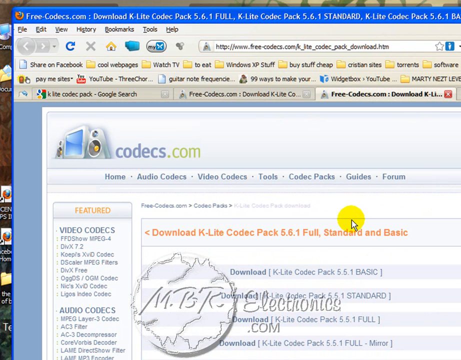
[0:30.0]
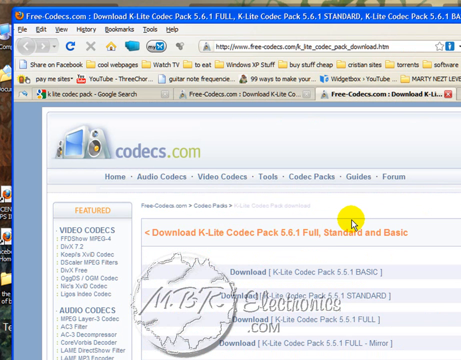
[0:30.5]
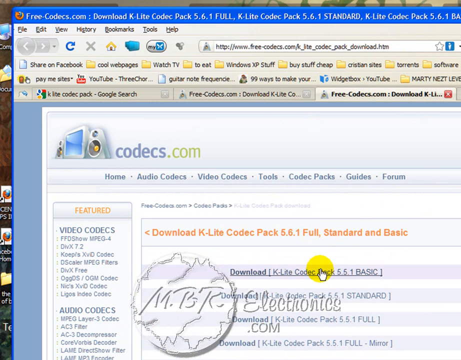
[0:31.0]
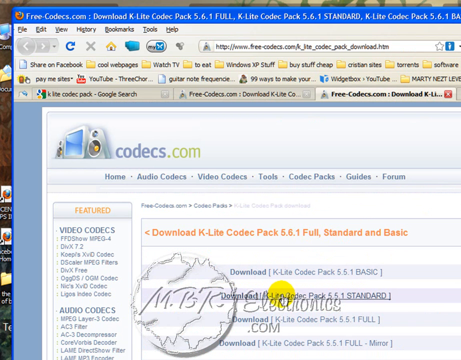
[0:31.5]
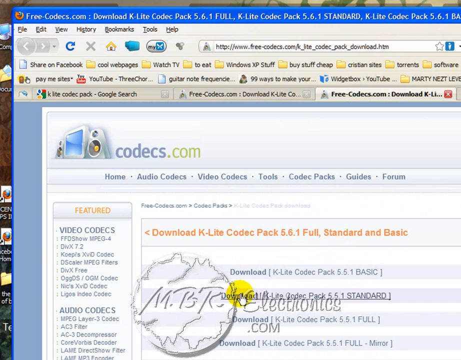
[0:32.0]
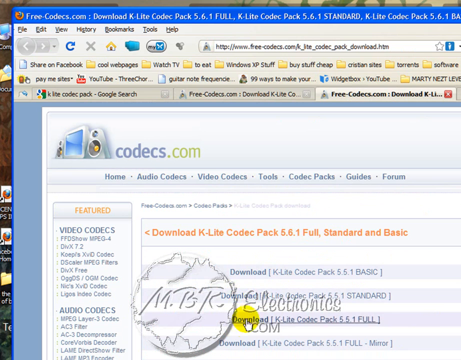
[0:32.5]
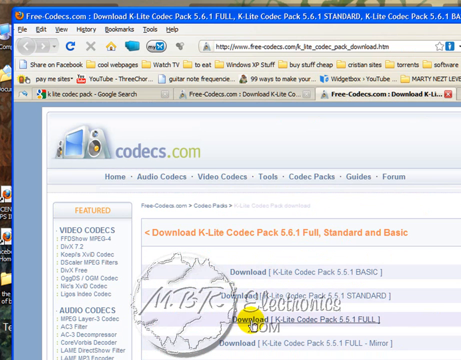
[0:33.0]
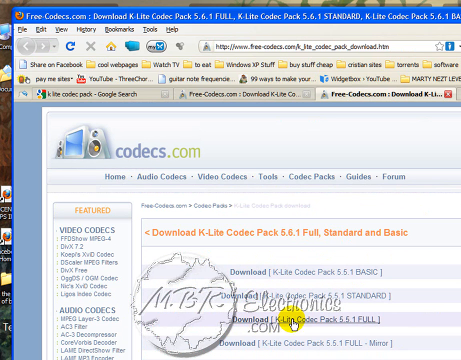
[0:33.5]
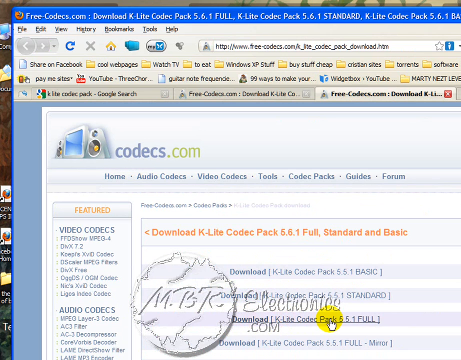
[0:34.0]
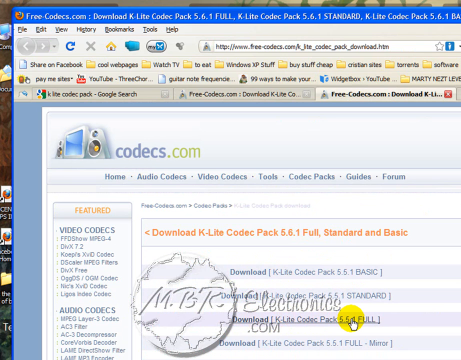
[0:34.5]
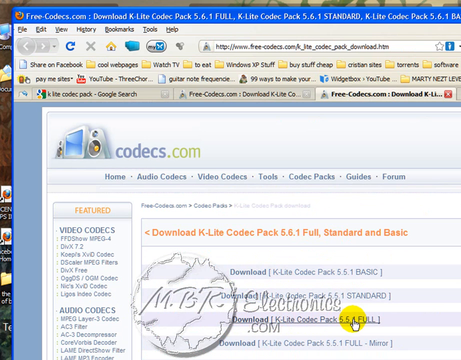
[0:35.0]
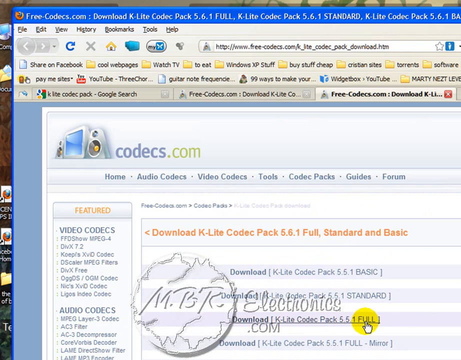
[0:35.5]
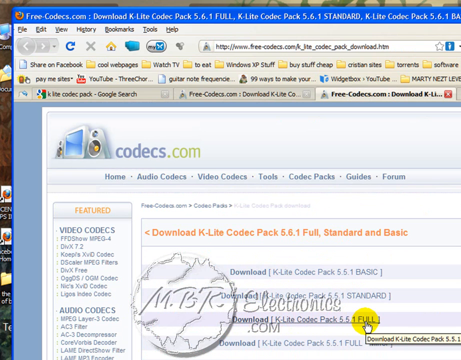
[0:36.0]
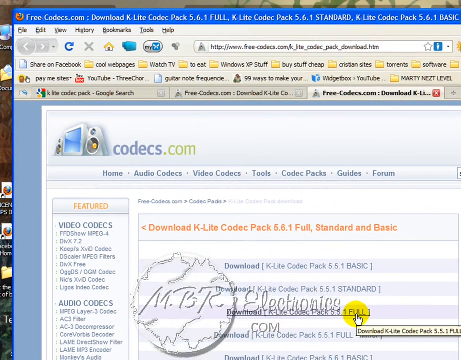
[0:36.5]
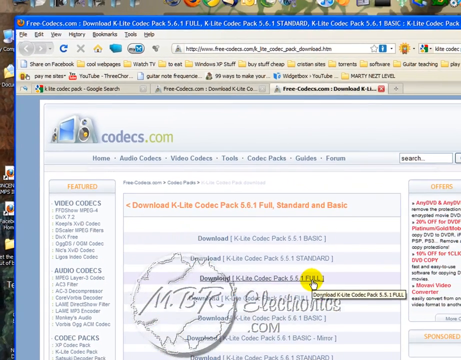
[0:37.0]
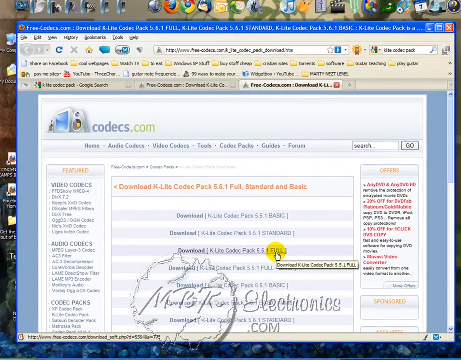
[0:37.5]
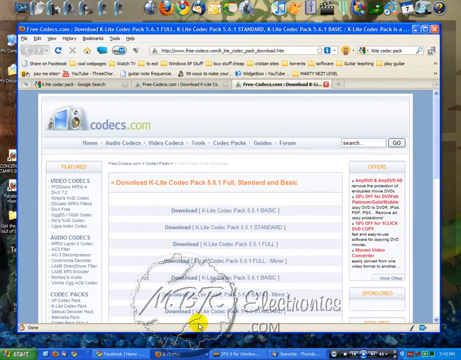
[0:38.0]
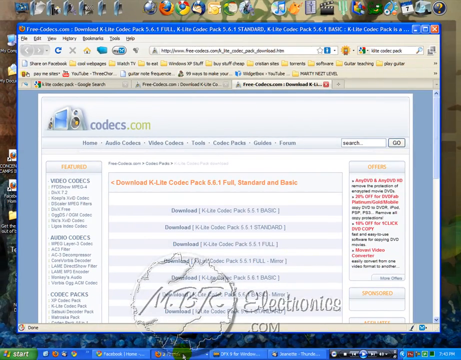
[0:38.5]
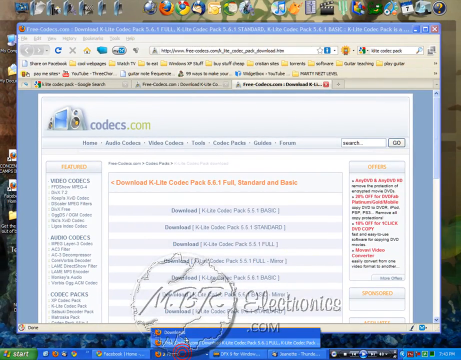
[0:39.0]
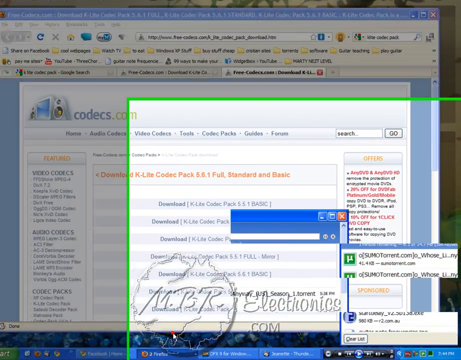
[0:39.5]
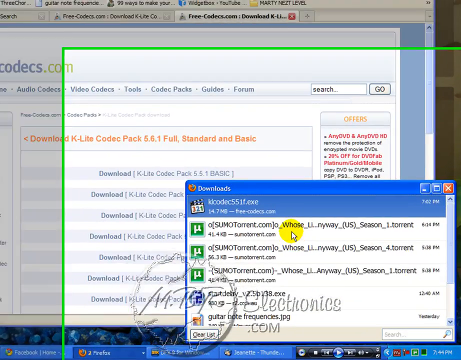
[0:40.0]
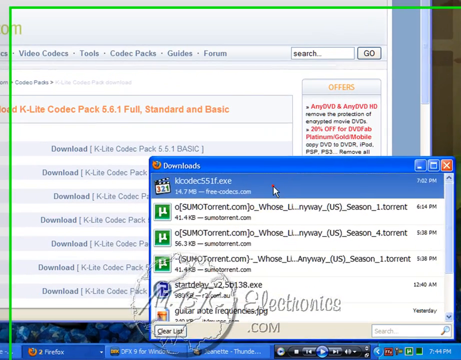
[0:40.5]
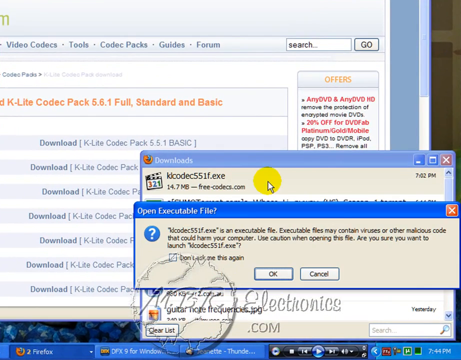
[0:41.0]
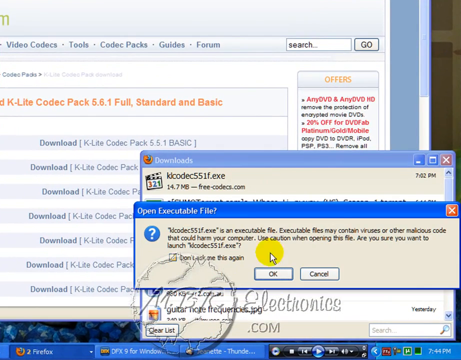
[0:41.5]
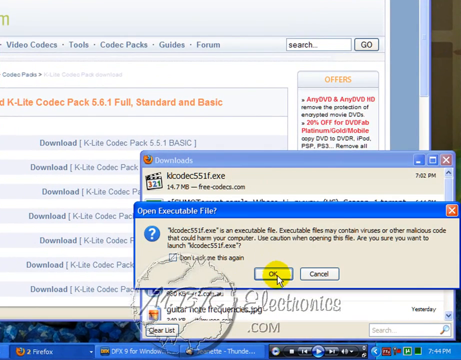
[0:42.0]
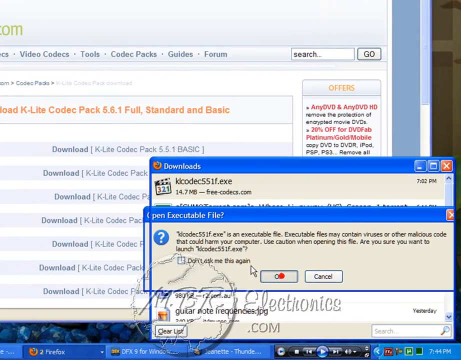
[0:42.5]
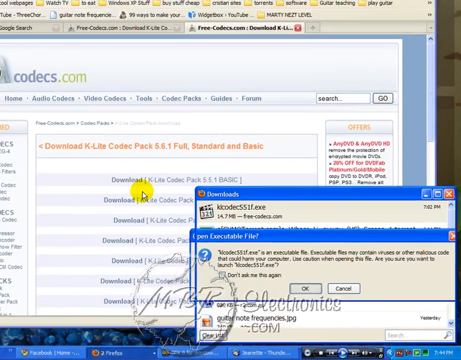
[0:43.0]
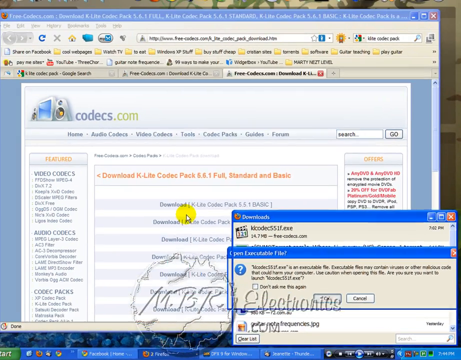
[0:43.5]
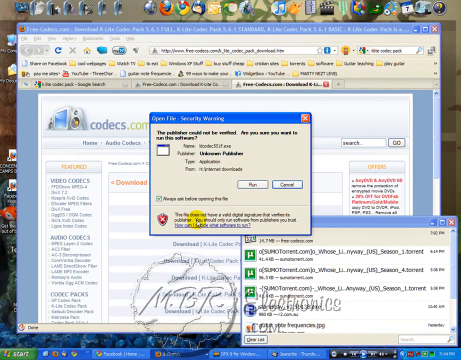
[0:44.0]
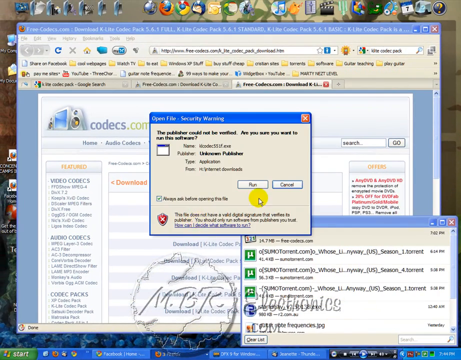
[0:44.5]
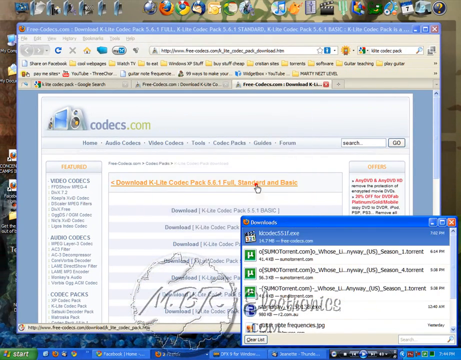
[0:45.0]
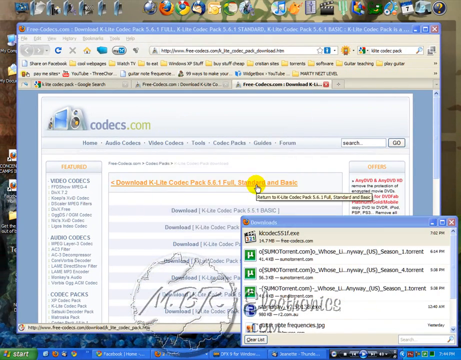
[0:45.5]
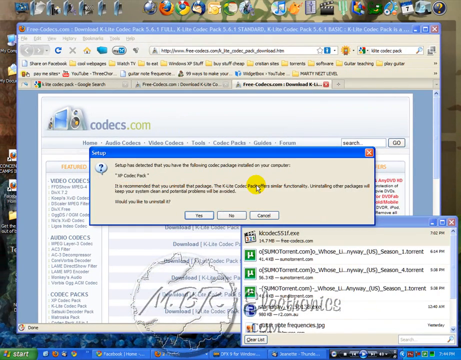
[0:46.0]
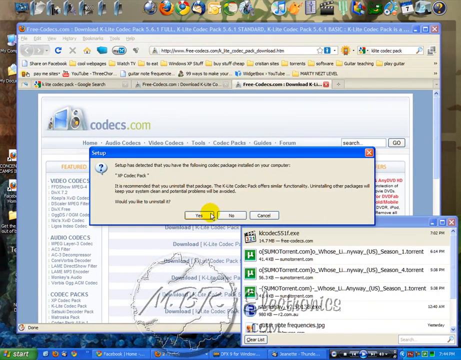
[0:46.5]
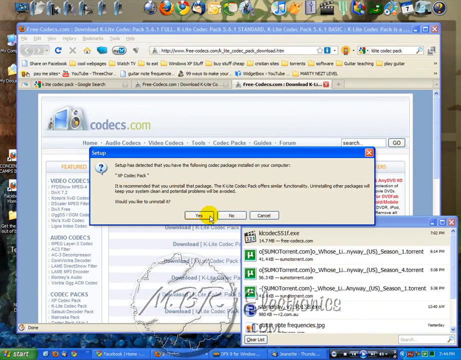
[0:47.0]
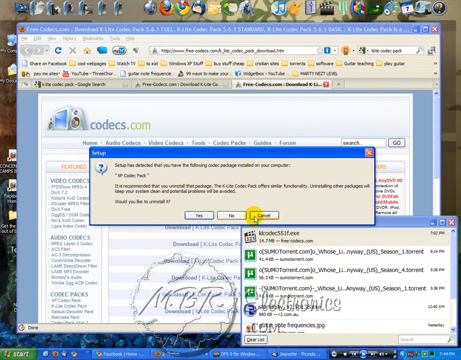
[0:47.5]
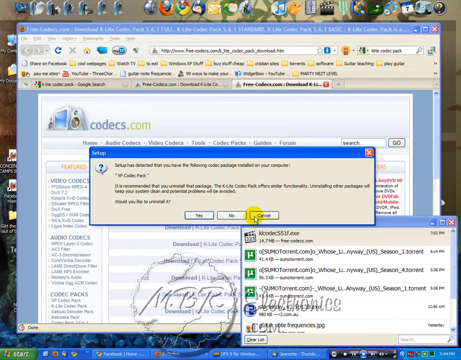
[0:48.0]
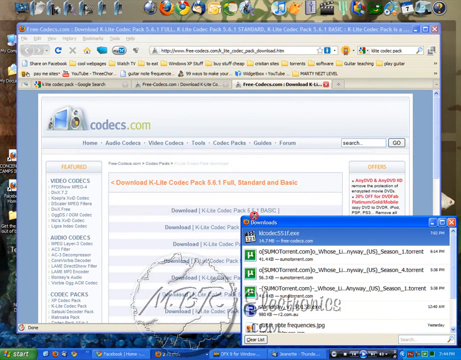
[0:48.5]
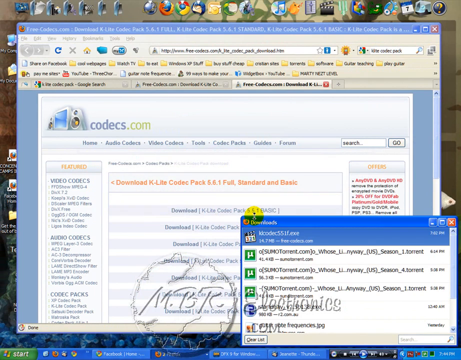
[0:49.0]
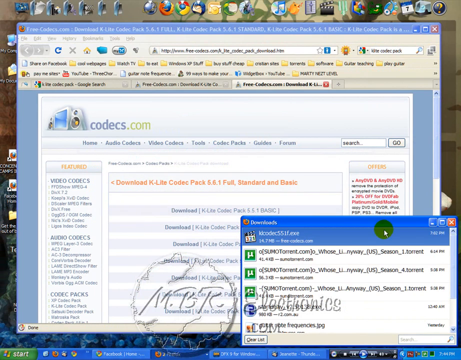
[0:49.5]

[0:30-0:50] A codecs.com page opens, with sections for audio codecs, video codecs, tools, codec packs, guides and the forum. On the page where the type of Keylight codec pack is chosen, "download Keylight codecs pack 5.5.1 full" is clicked. This leads to a page where download is pressed; the download completes, and it is shown that the downloaded version now needs to be installed. The pack is then installed.